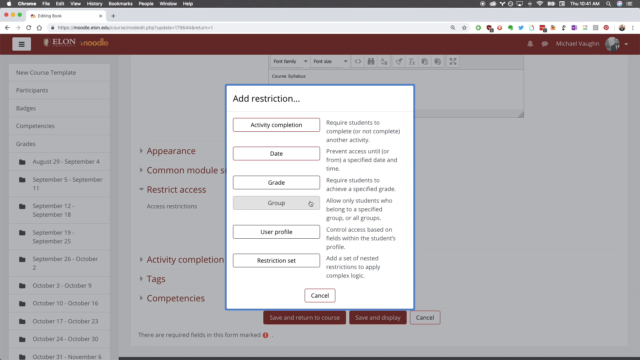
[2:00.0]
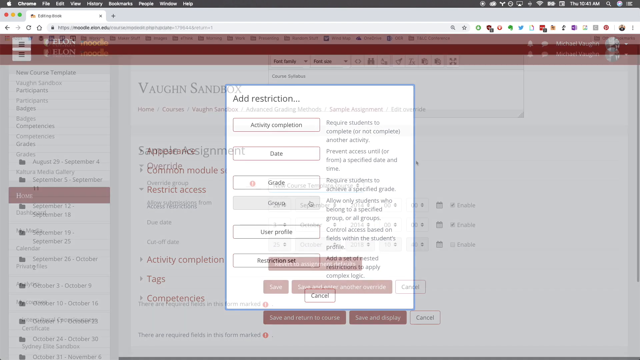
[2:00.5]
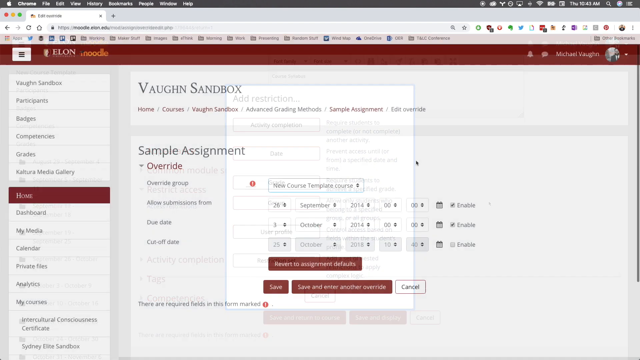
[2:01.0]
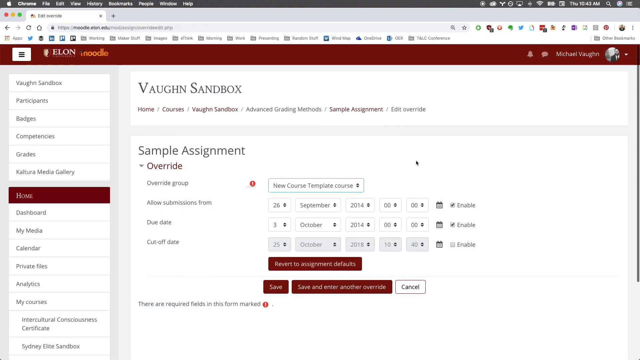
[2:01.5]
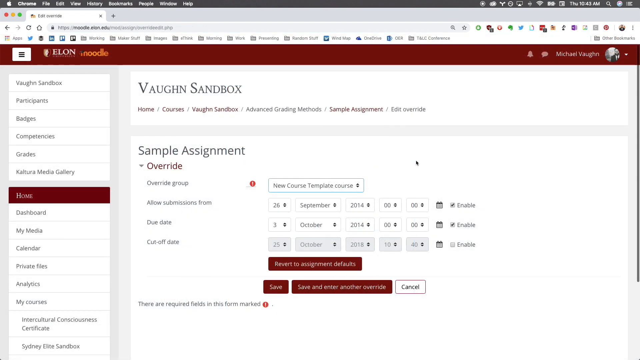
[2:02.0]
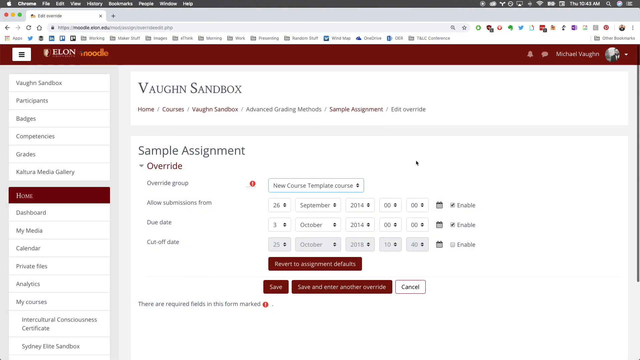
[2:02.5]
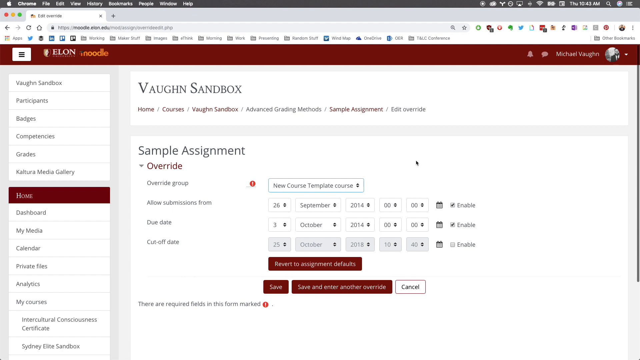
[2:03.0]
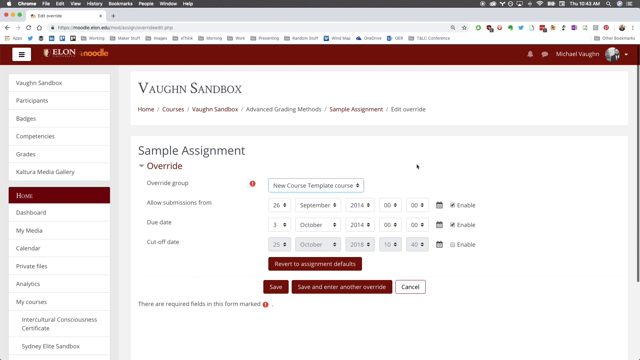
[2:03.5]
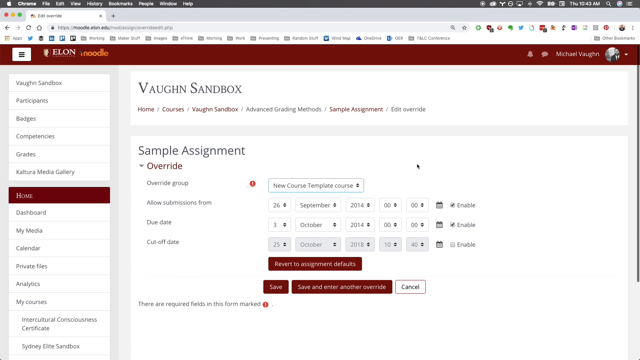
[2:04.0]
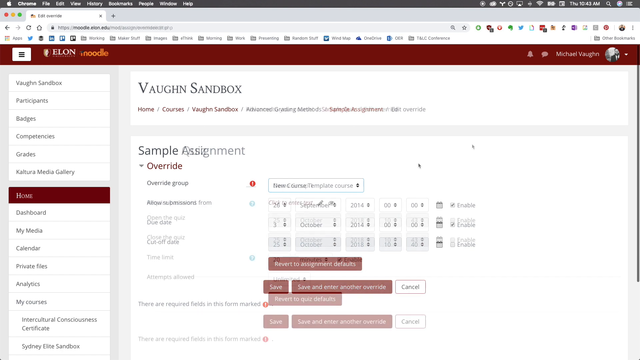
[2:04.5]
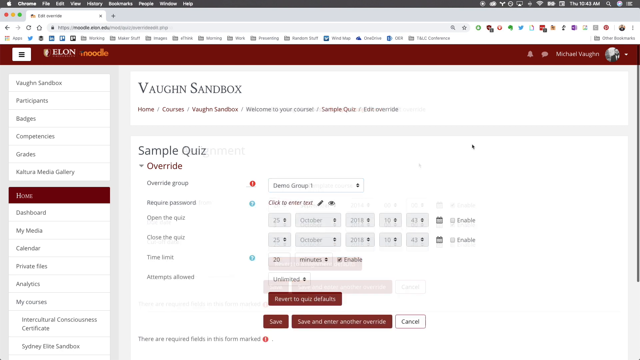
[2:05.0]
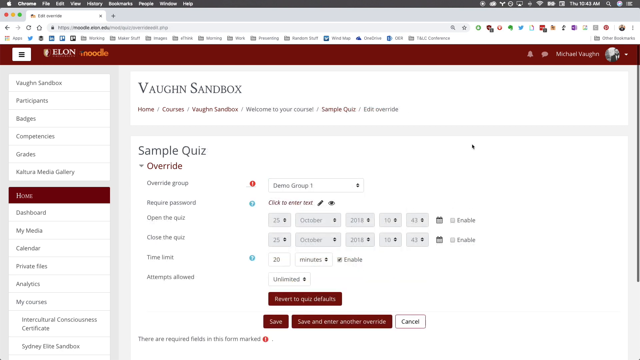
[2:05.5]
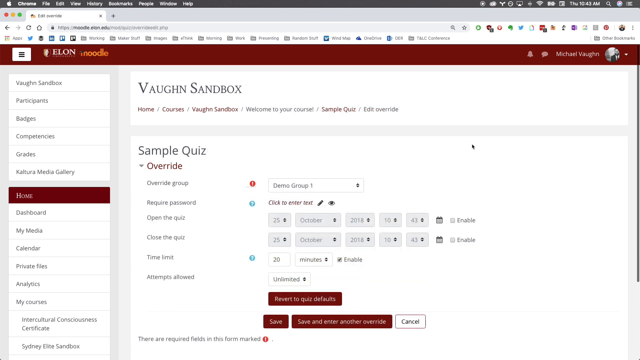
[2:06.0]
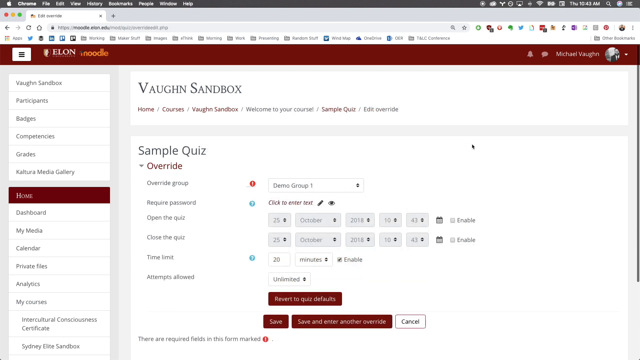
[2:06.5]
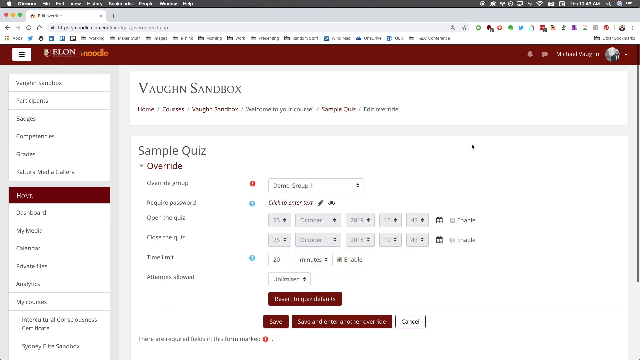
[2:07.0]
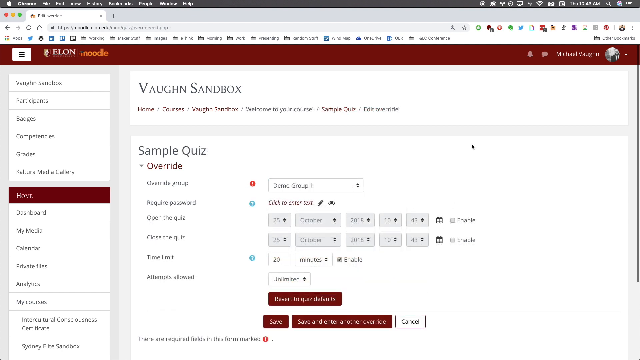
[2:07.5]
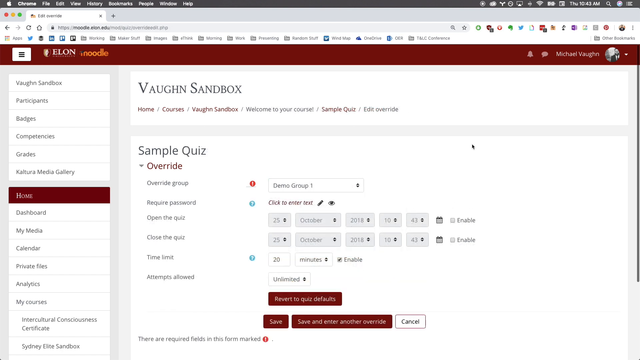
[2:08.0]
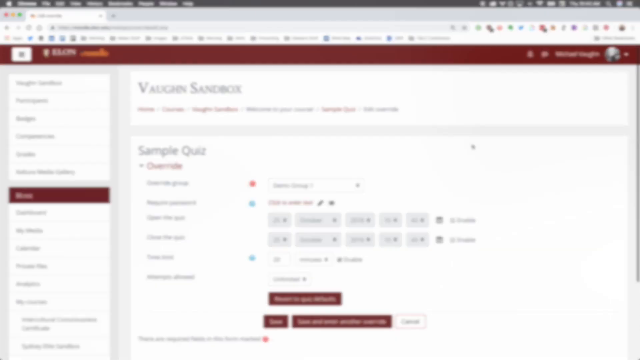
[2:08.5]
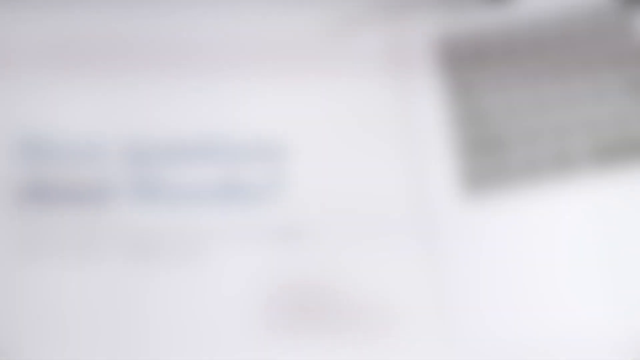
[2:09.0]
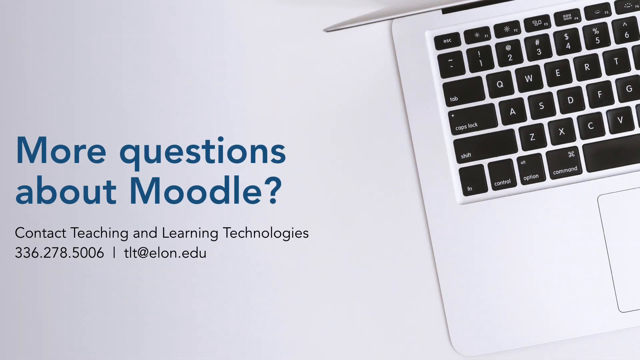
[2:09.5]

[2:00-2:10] "Vaughn Sandbox" is at the top, and the page says "Sample Assignment" and "Edit Override". It is like a table, with many drop-downs and dates. It appears to fade into a new page saying "Sample Quiz", with many different options on the left-hand side, date selections and drop-downs on the right-hand side, and many buttons. It offers options to change settings such as the quiz open and close dates, the number of attempts allowed, and the time limit. Next, it fades to a new page saying "more questions about Moodle".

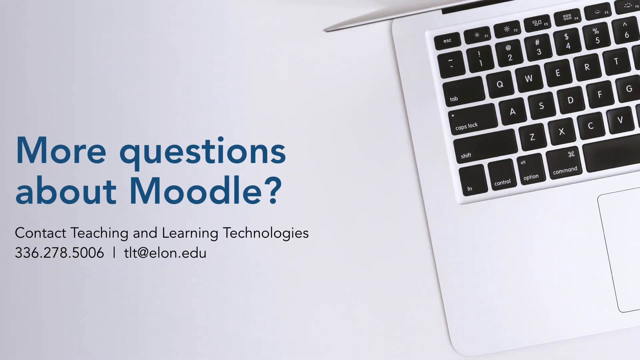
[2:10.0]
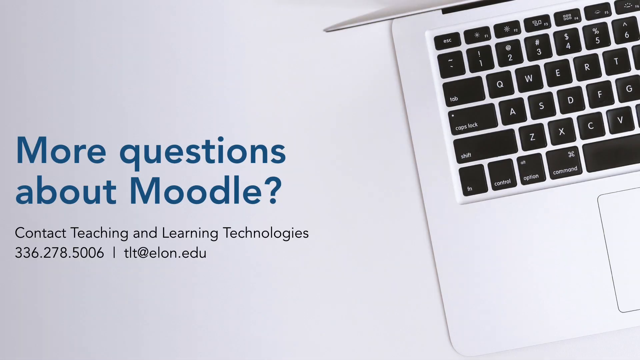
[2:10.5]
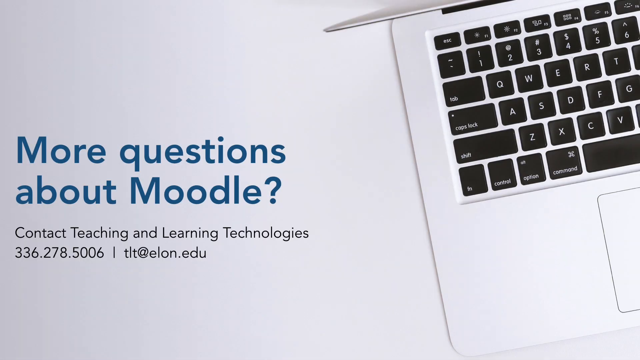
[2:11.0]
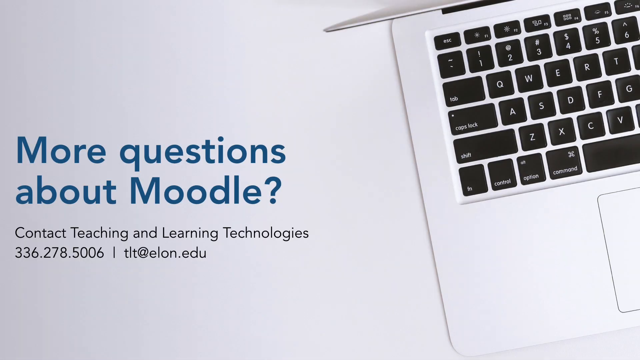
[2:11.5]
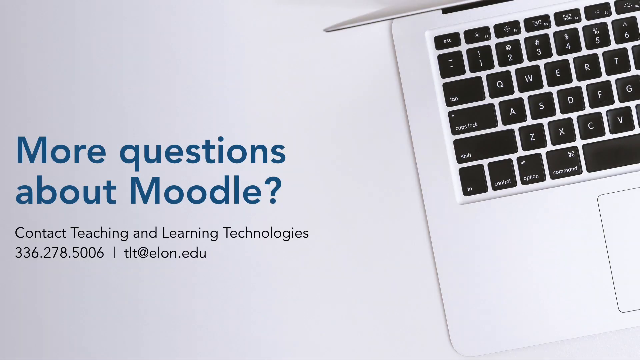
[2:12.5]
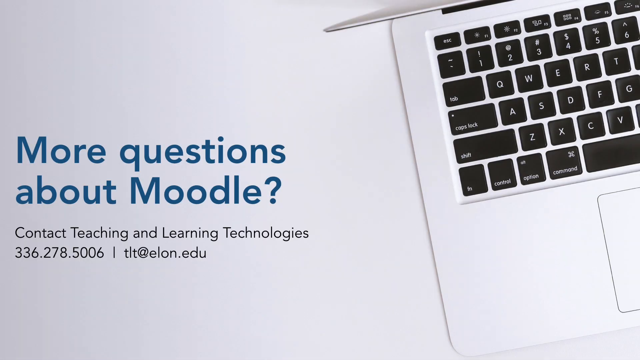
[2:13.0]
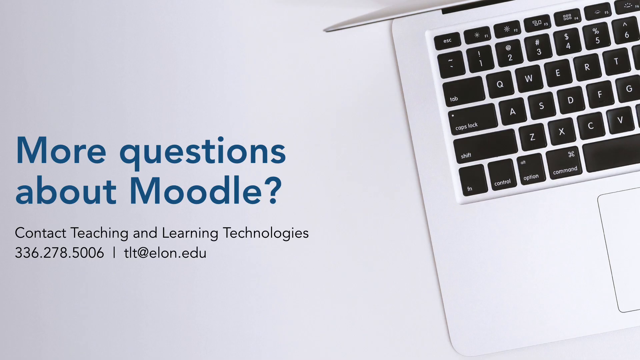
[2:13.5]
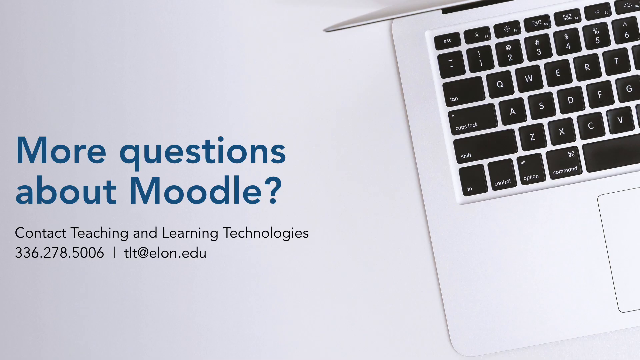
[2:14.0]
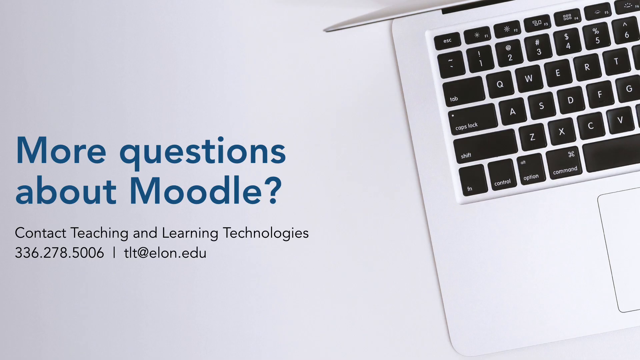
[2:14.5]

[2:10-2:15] The final screen of the video says "more questions about Moodle" on the left middle of the page in medium-sized blue text, underneath a smaller black text saying "contact teaching and learning technologies 336.278.5006", followed by a pipe symbol and the email address "tlt@elon.edu". On the right-hand side is an overhead view of an Apple MacBook at a slight angle, tilted towards the left, with only about the first 40% of the laptop visible. The MacBook keys are black with white text. The background is a white or greyish tone.